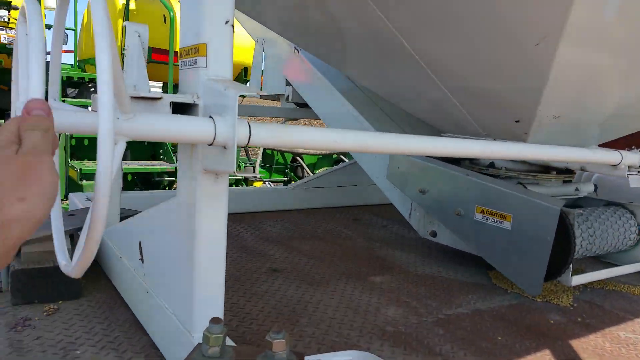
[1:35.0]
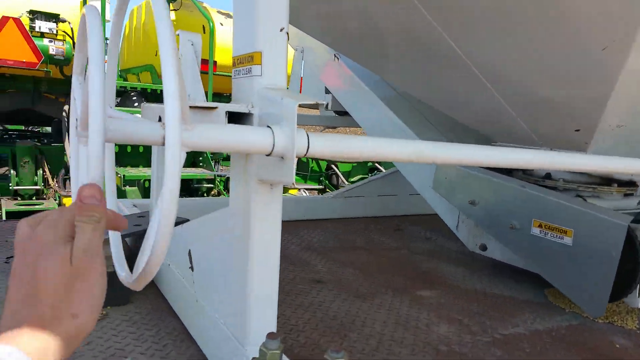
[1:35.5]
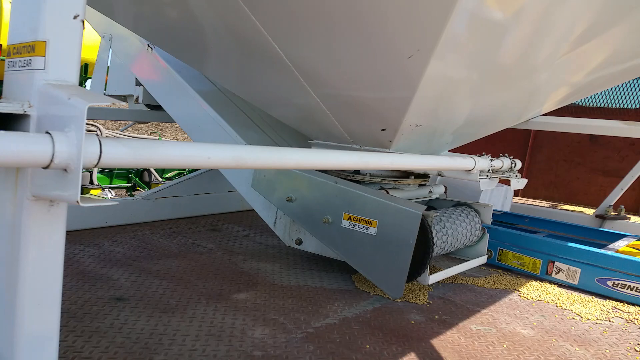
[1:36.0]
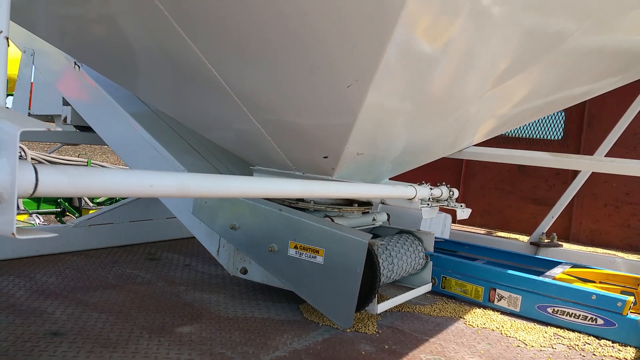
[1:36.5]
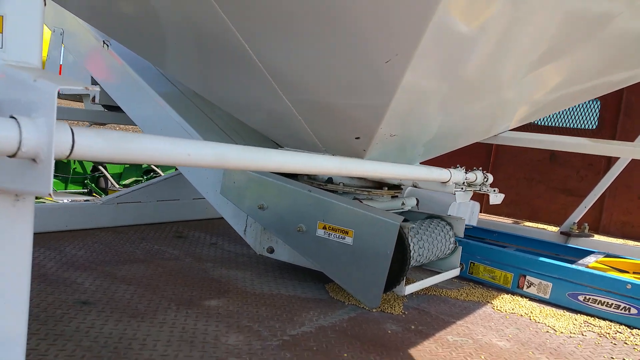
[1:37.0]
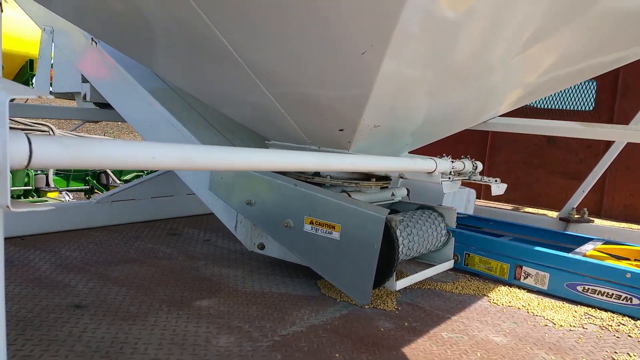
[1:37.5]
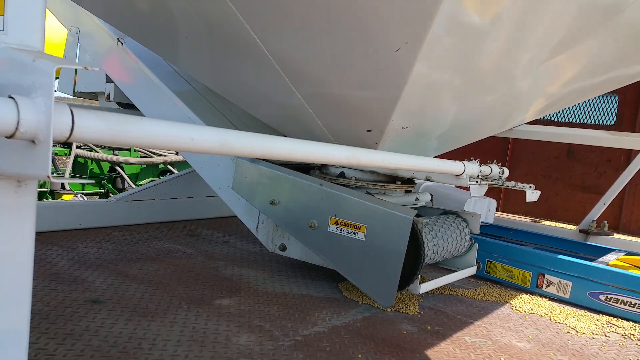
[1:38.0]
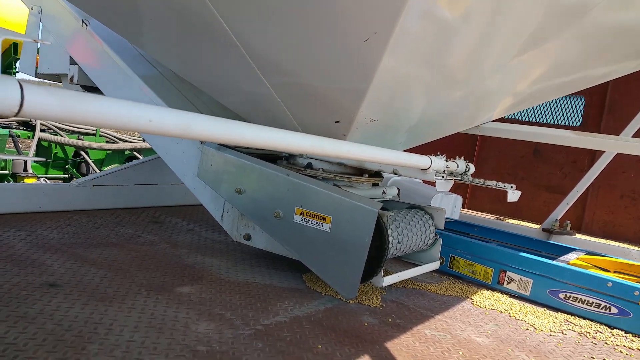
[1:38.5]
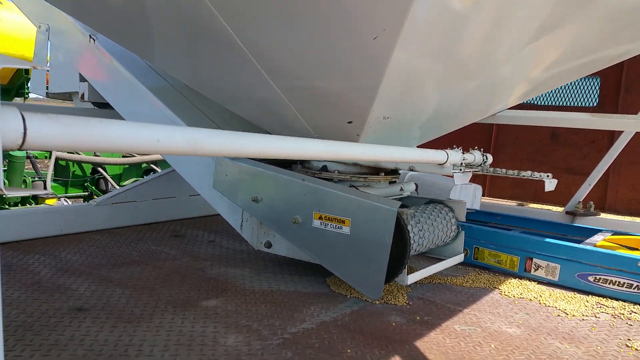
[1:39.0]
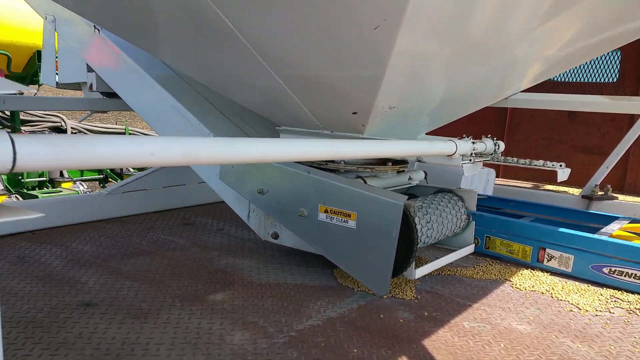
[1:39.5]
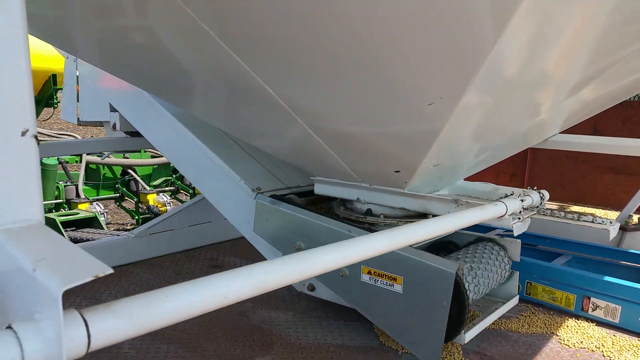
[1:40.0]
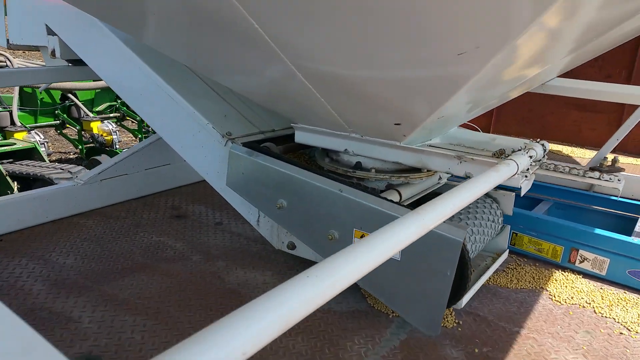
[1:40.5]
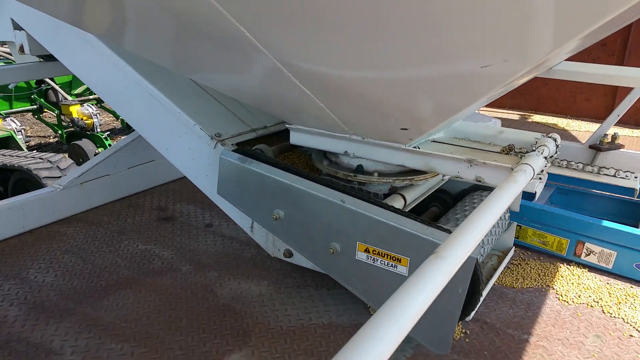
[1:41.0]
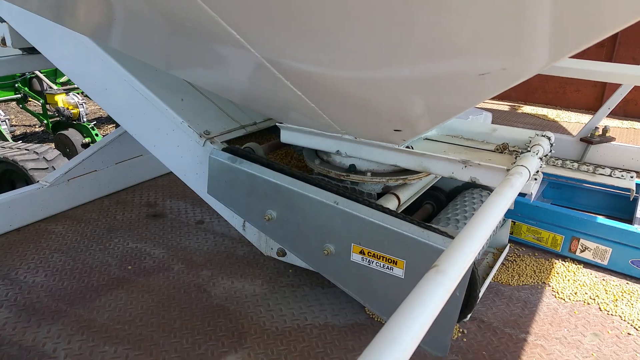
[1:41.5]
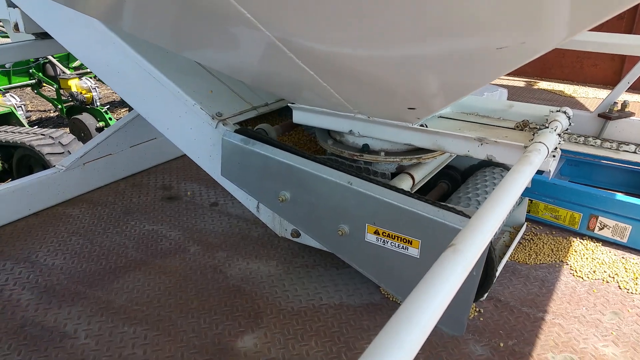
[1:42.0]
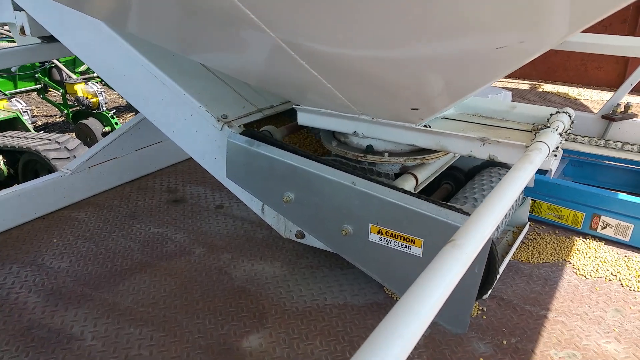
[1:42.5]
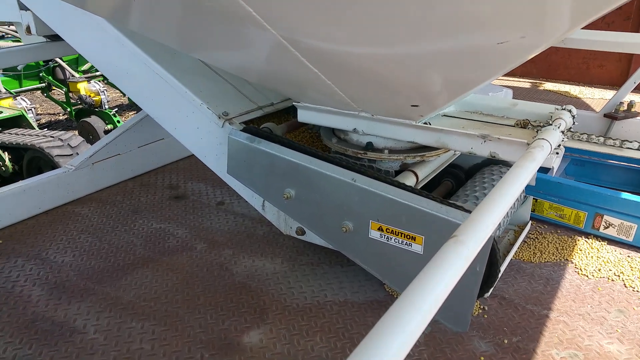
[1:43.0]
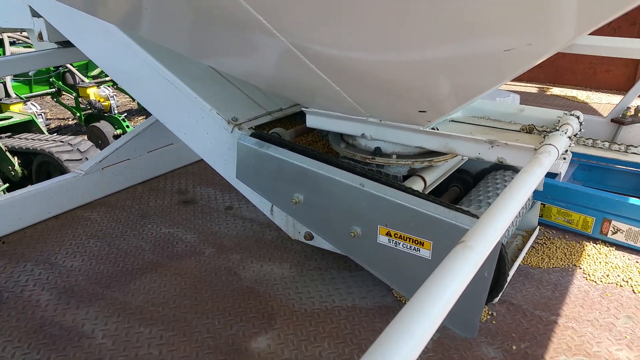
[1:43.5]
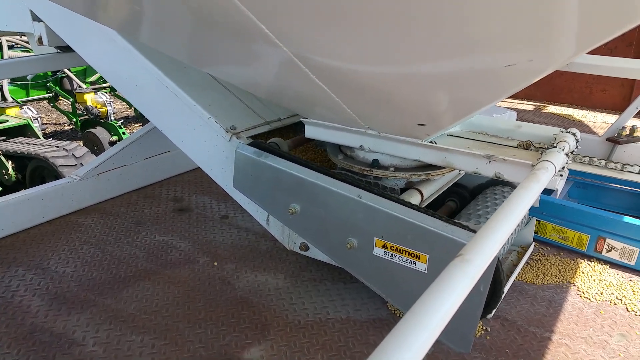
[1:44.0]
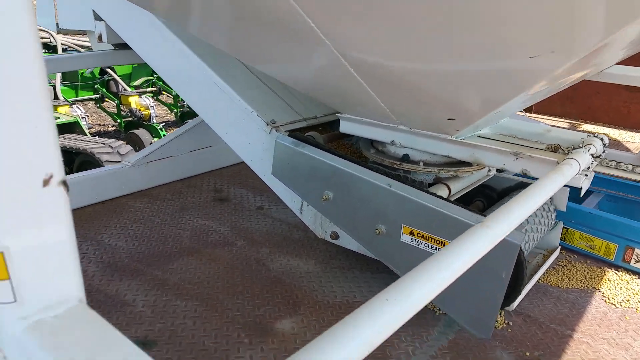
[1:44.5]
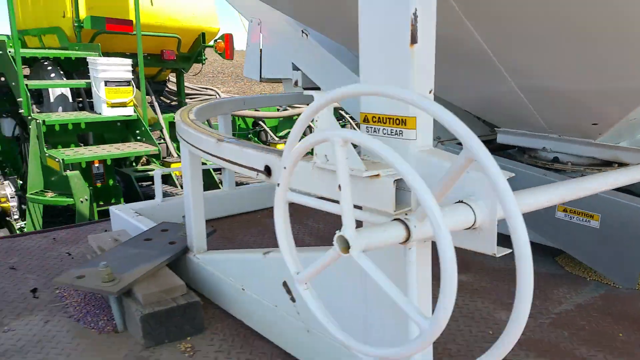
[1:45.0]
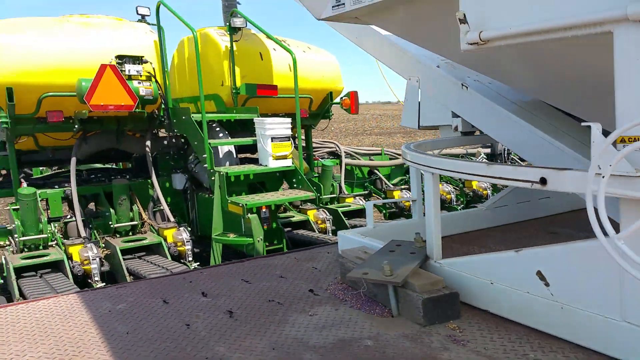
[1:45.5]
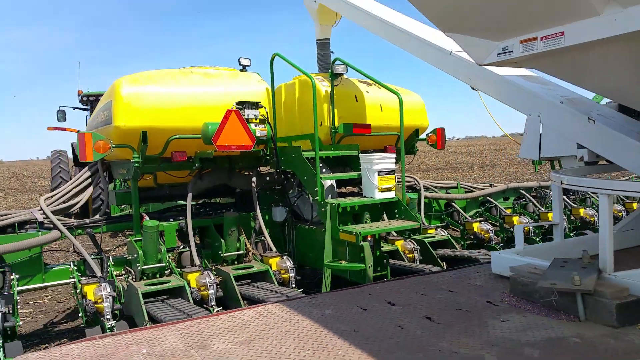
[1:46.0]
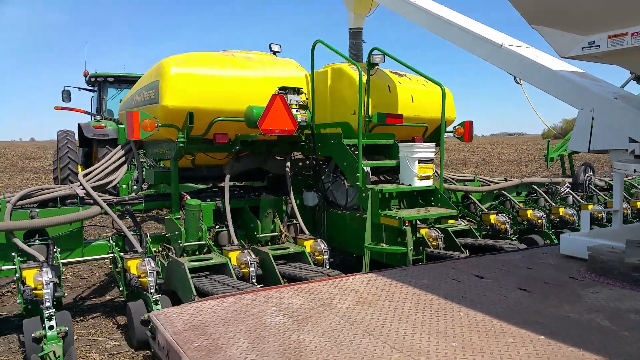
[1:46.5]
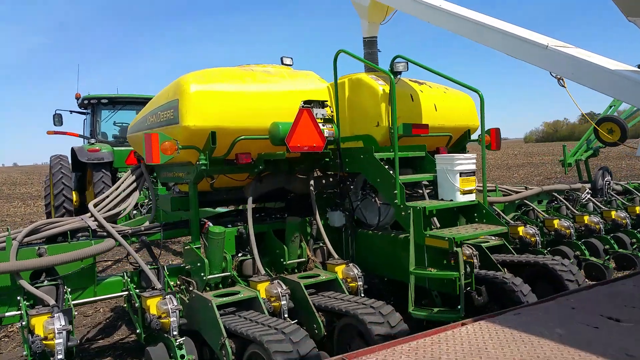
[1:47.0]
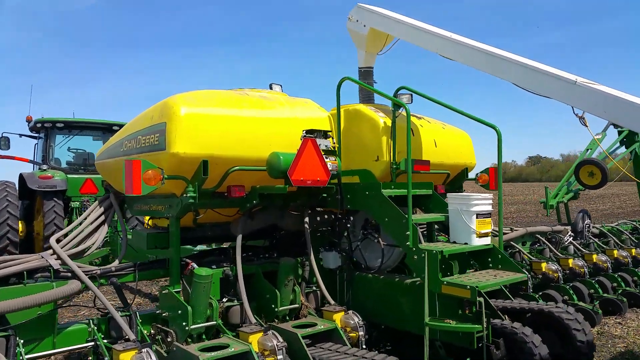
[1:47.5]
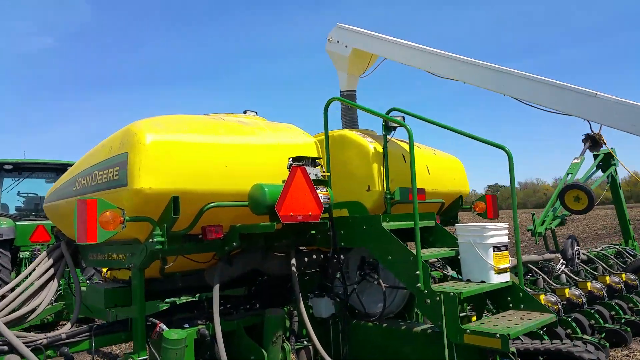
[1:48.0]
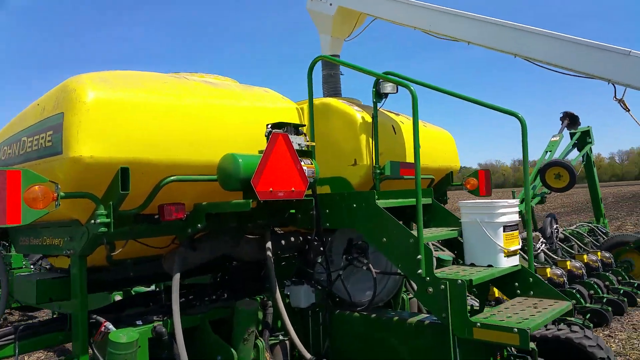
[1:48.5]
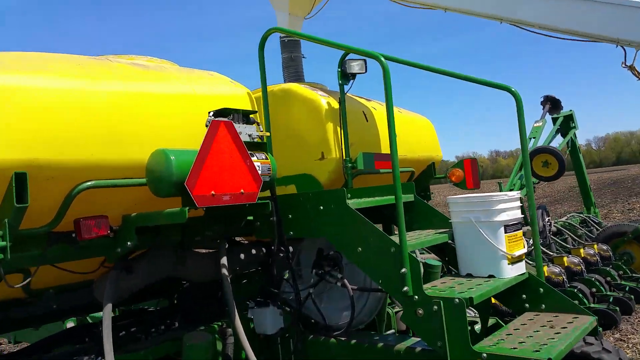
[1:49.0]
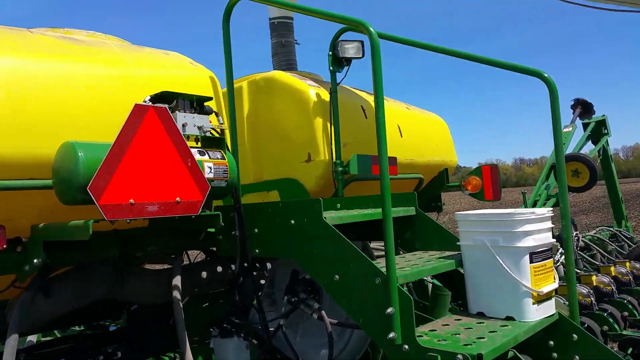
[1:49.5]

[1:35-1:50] The man twists the white valve. The camera turns under the white container, showing a cylinder starting to rotate; the cylinder appears to have chains wound around it, and the machinery starts to move. There also seem to be more chains moving along the white tube. The man walks around the platform, and the camera looks at the agricultural machine, which says John Deere as its brand. A white bucket is on the stairs leading to the top of the machine.